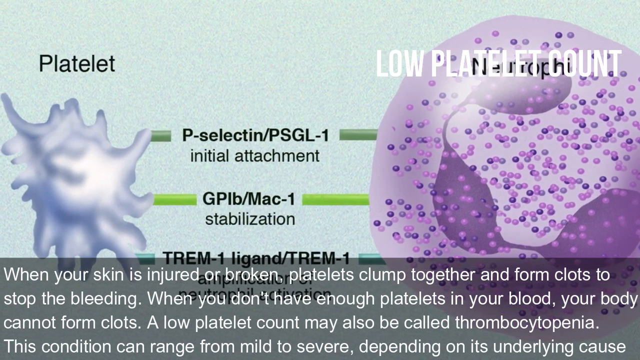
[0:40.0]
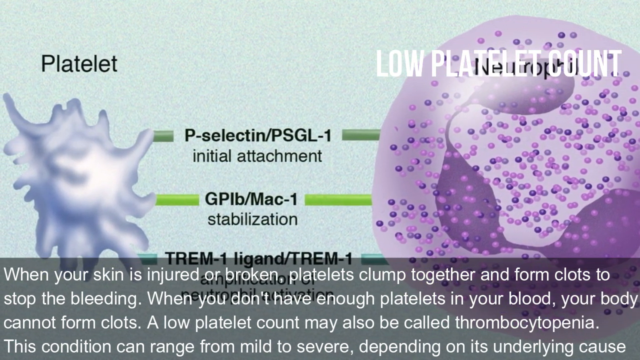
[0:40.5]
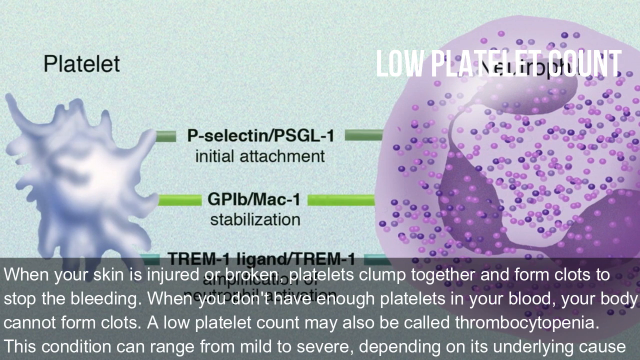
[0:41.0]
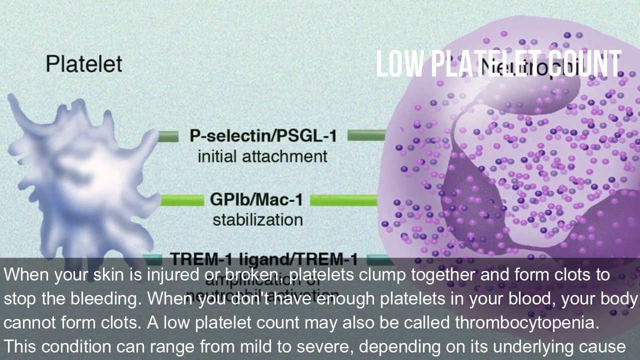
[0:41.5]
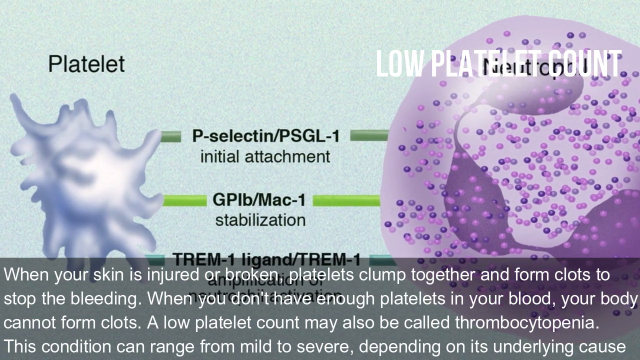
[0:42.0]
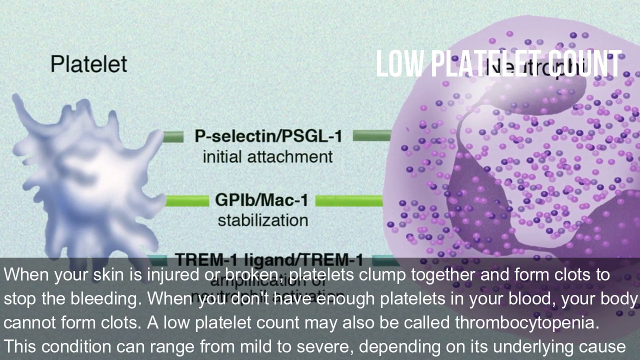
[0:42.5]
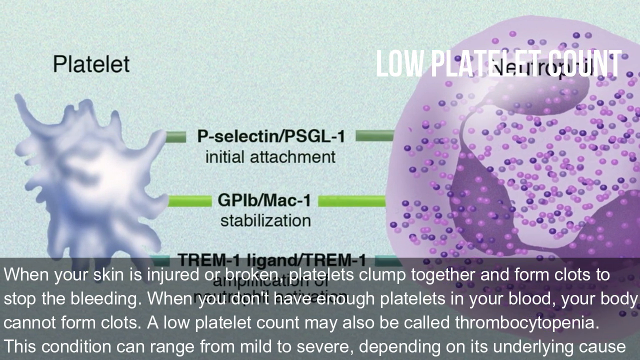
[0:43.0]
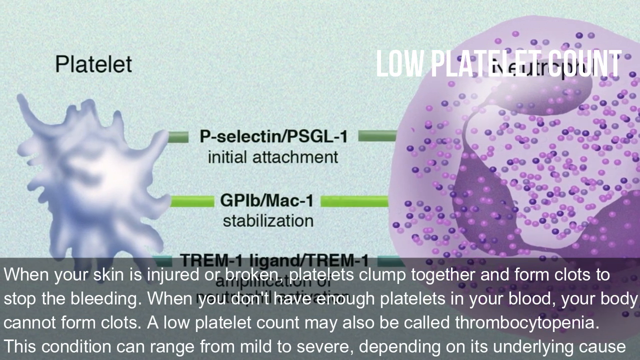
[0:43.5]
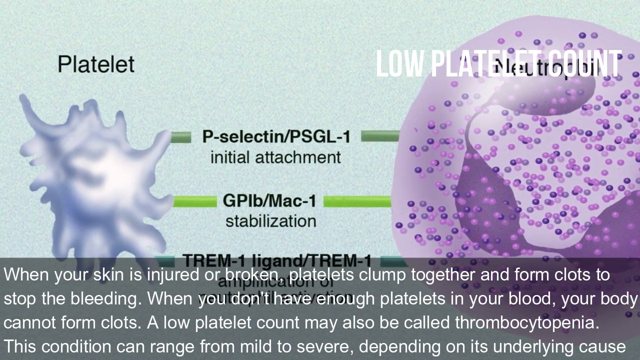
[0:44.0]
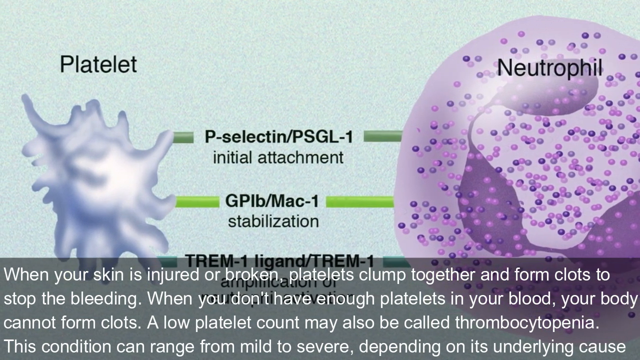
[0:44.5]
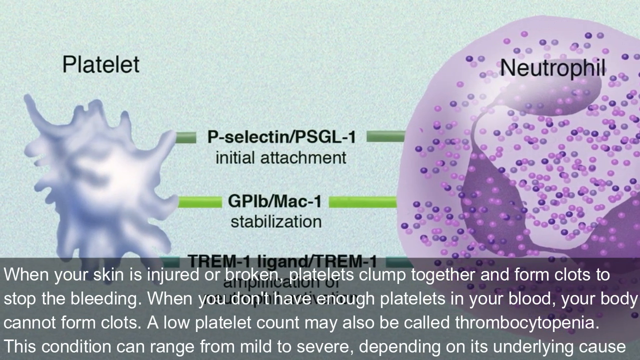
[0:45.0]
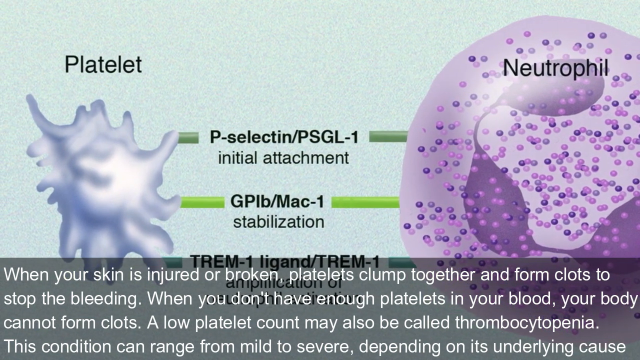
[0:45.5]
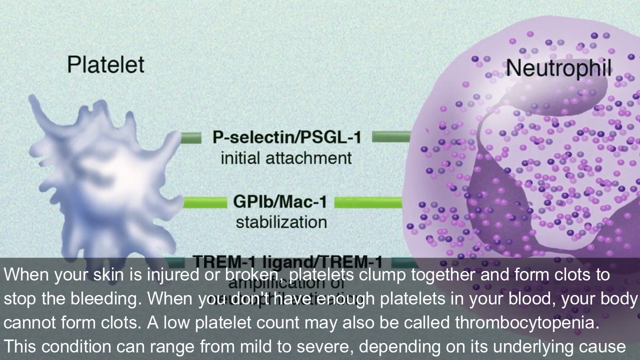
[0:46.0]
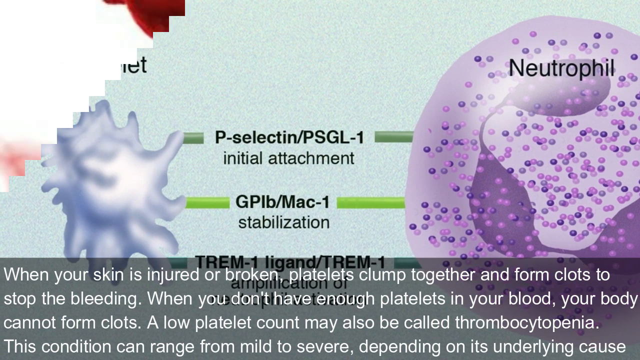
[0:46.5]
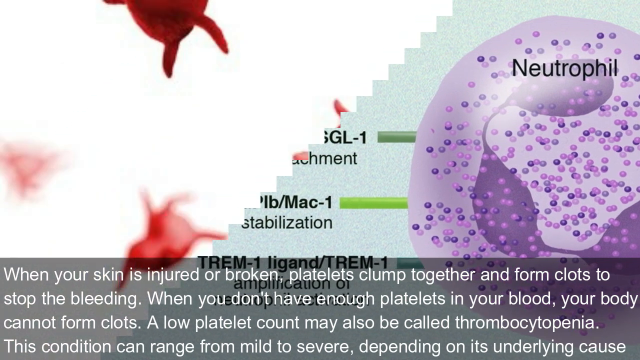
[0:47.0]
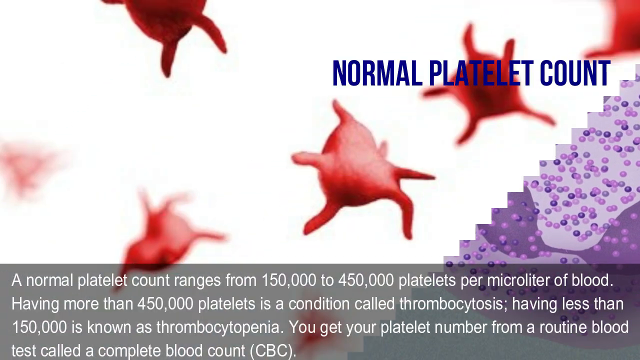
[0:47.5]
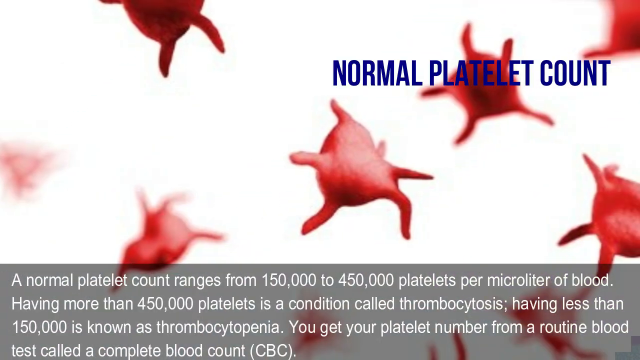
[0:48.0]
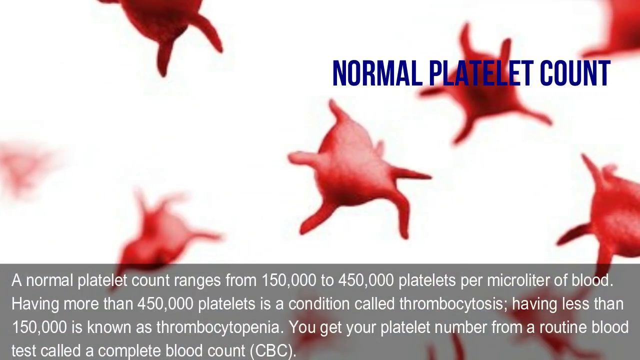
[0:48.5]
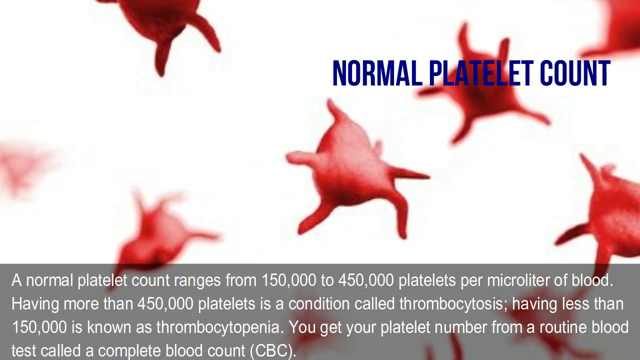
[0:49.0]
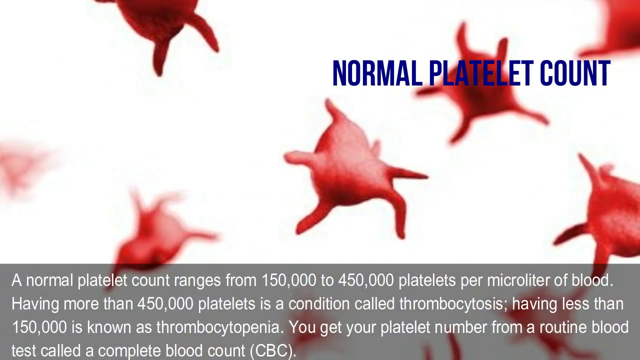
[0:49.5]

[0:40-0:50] The word "platelet" and the words "low platelet count" appear, with two purple objects in the background. At the bottom of the screen the text reads: "when your skin is injured or broken platelets clump together and form clots to stop the bleeding. When you don't have enough platelets in your blood, your body cannot form clots. A low platelet count may also be called thrombocytopenia. This condition can range from mild to severe depending on its underlying cause." The background is white with several red, odd-shaped microorganisms floating around, and the words are blue.